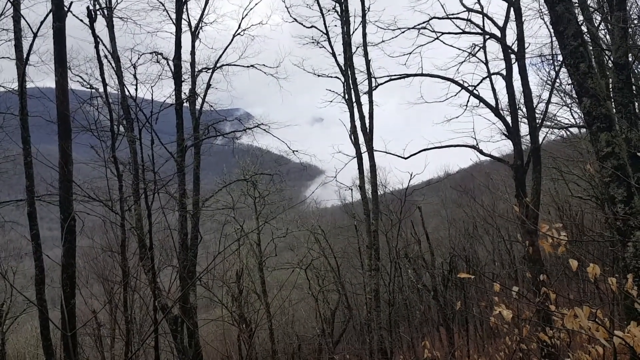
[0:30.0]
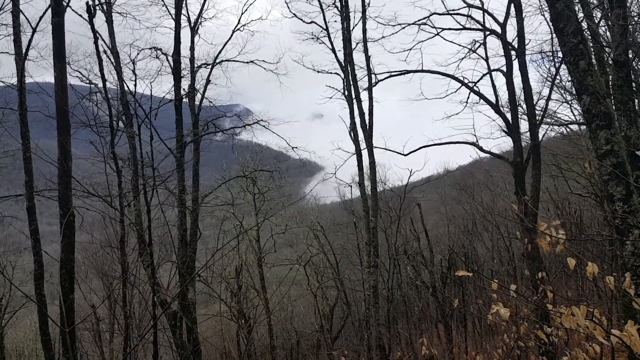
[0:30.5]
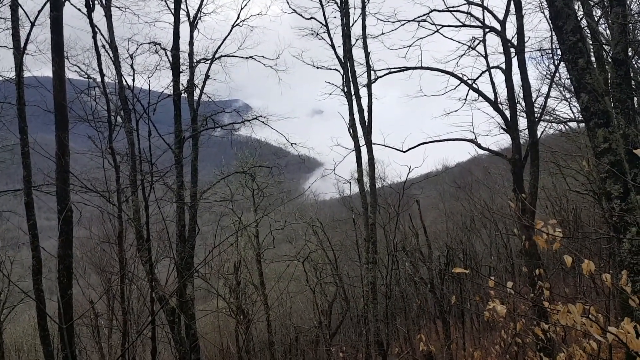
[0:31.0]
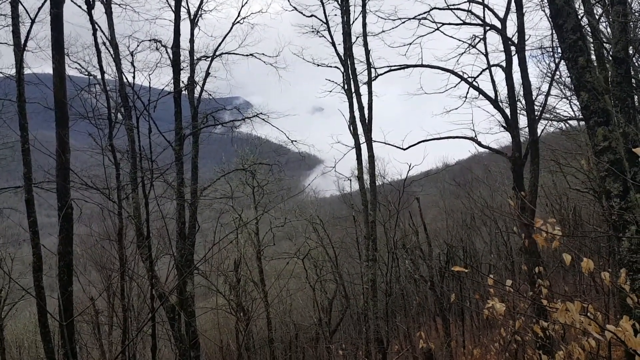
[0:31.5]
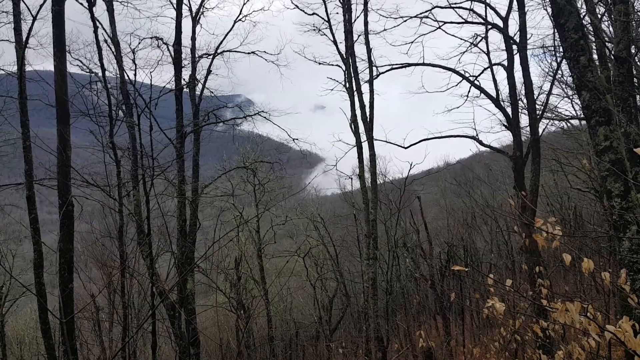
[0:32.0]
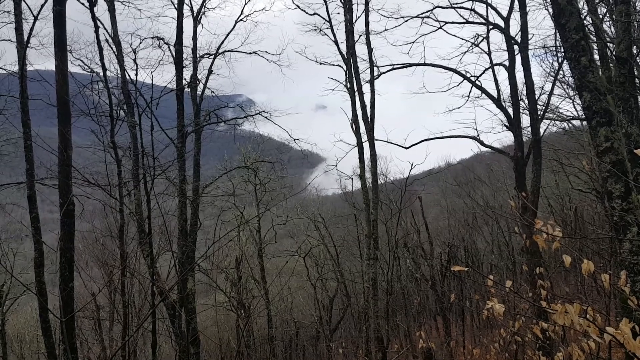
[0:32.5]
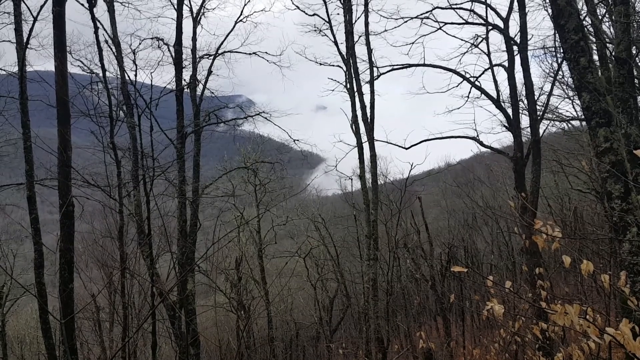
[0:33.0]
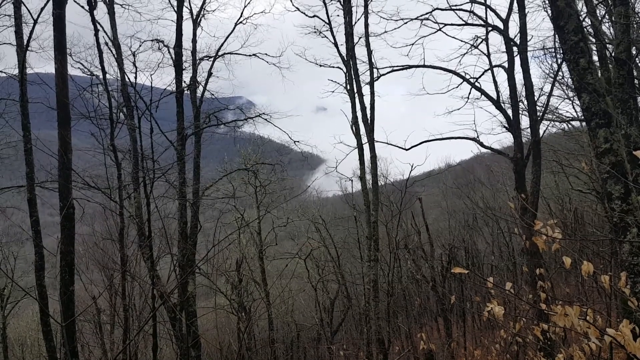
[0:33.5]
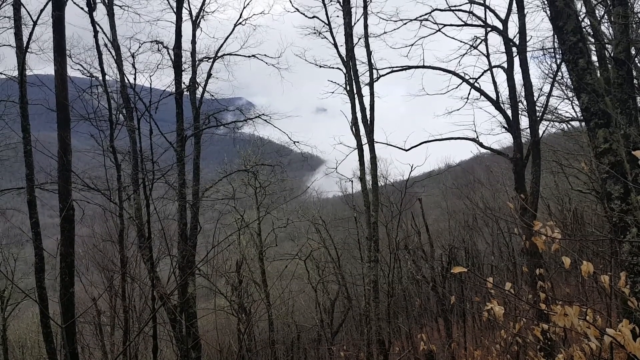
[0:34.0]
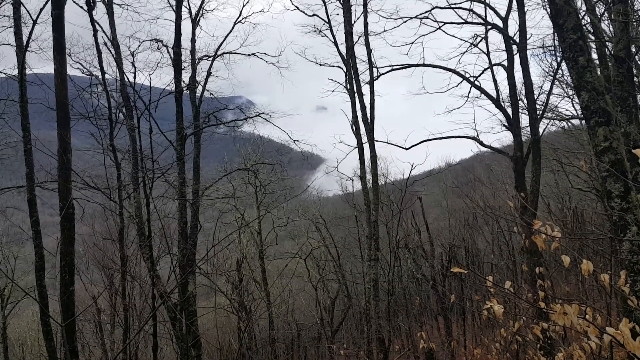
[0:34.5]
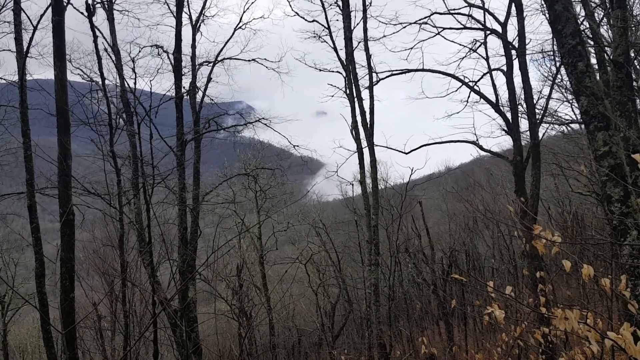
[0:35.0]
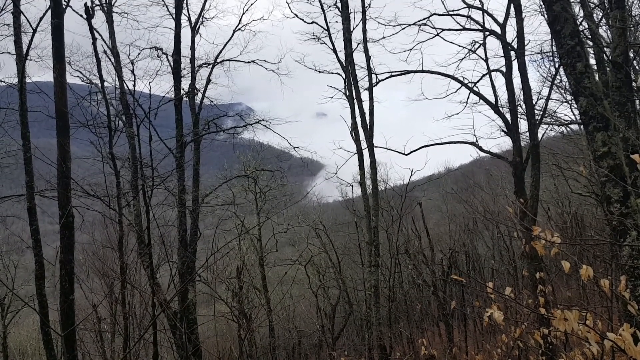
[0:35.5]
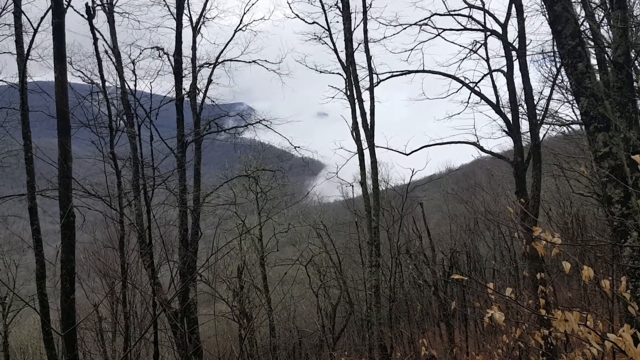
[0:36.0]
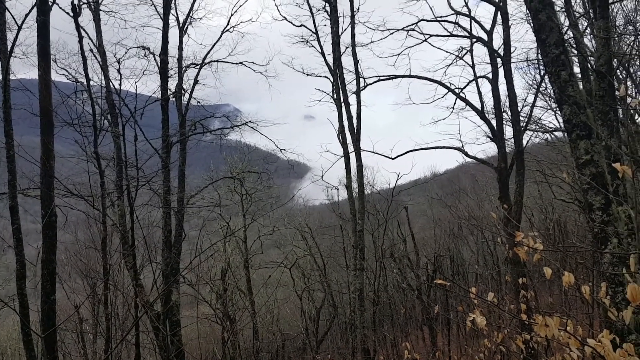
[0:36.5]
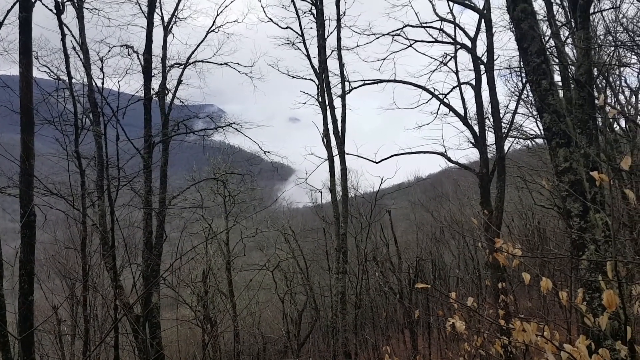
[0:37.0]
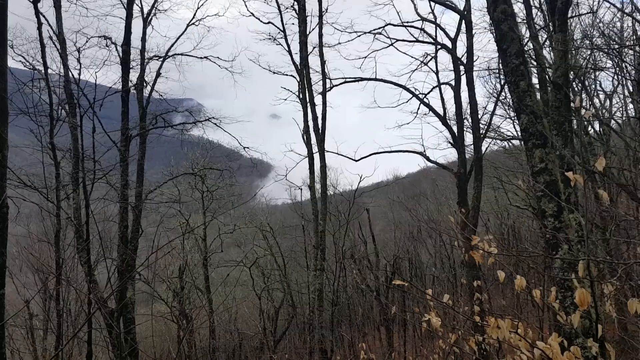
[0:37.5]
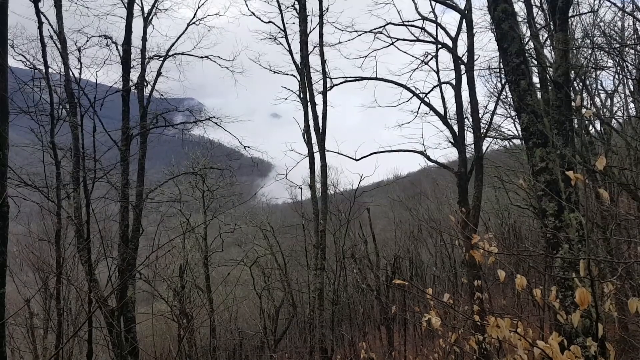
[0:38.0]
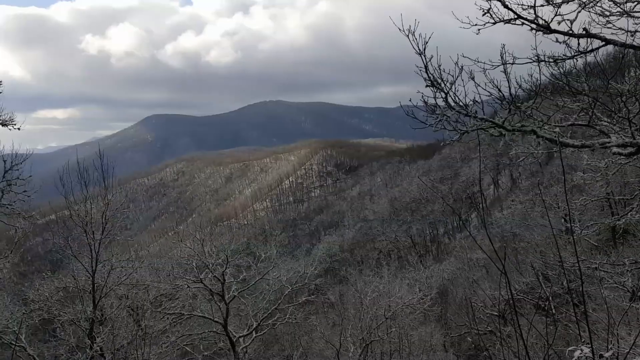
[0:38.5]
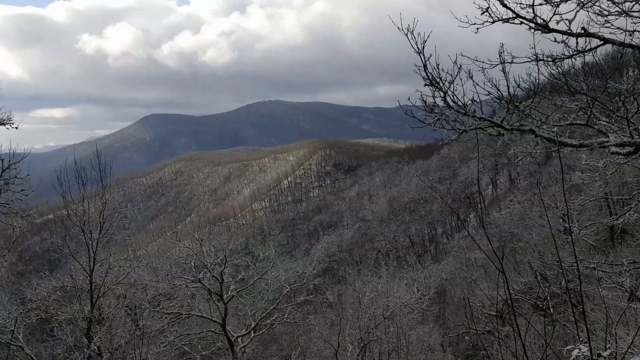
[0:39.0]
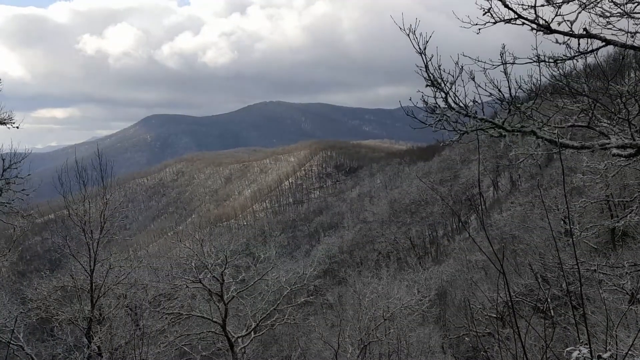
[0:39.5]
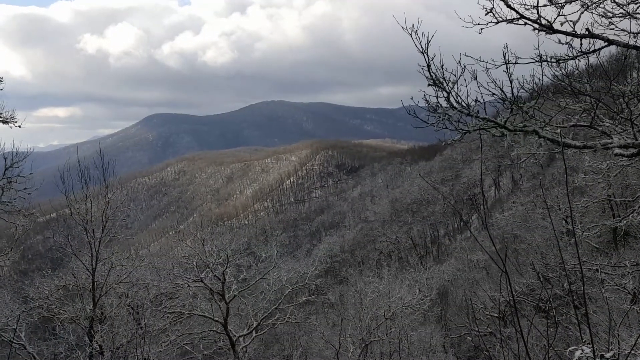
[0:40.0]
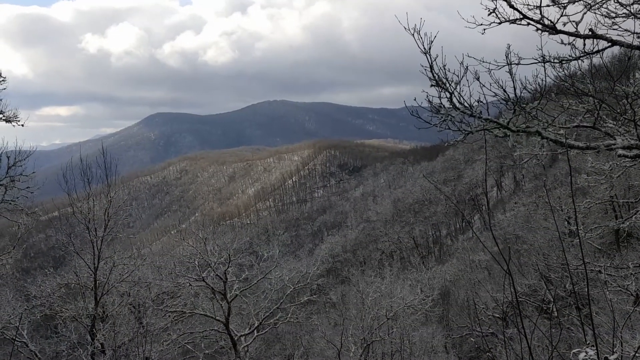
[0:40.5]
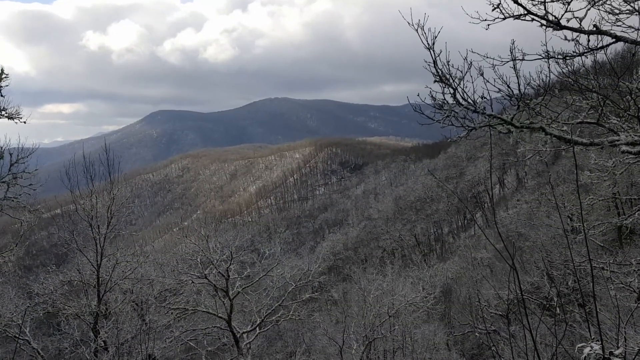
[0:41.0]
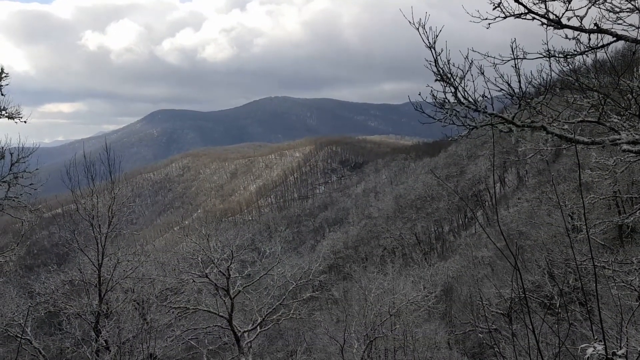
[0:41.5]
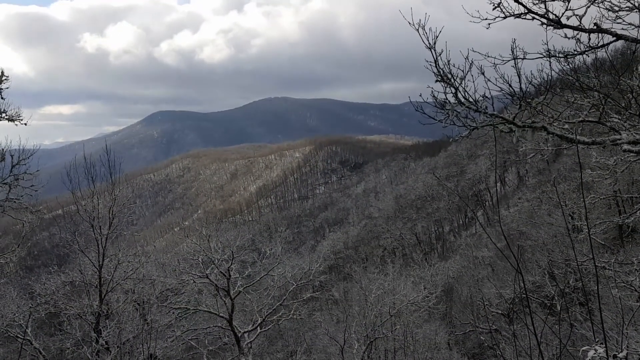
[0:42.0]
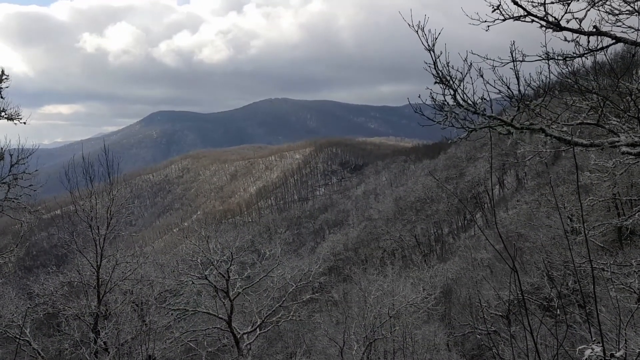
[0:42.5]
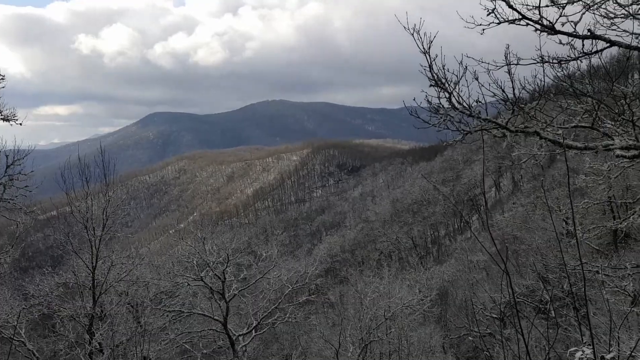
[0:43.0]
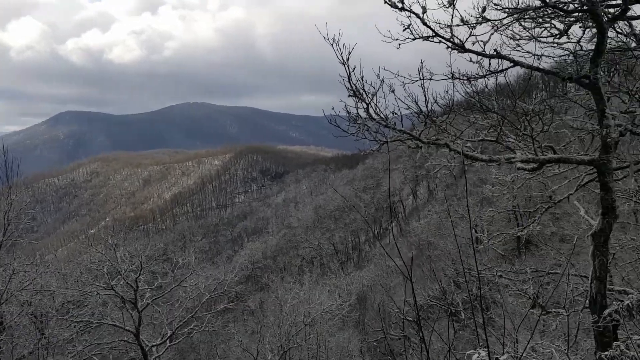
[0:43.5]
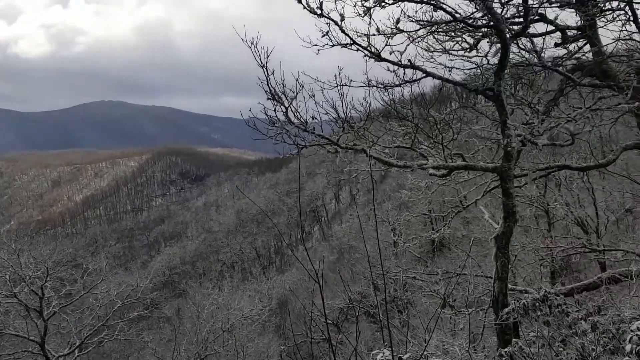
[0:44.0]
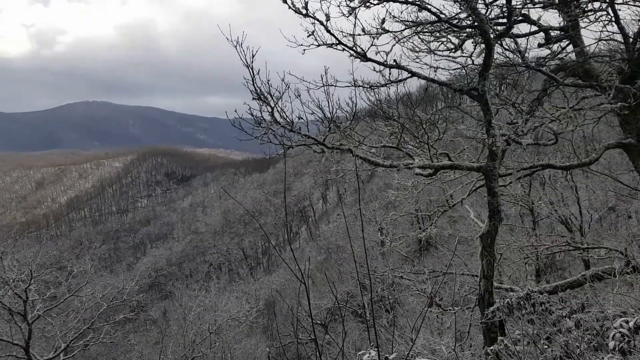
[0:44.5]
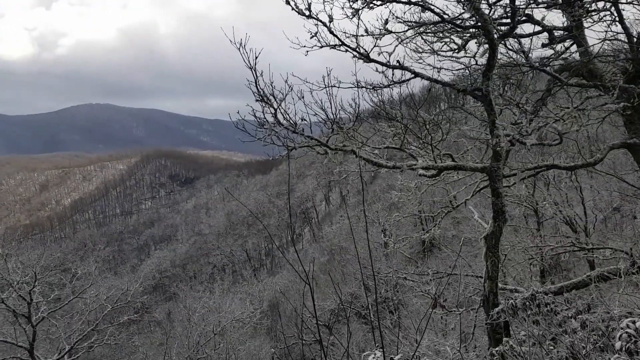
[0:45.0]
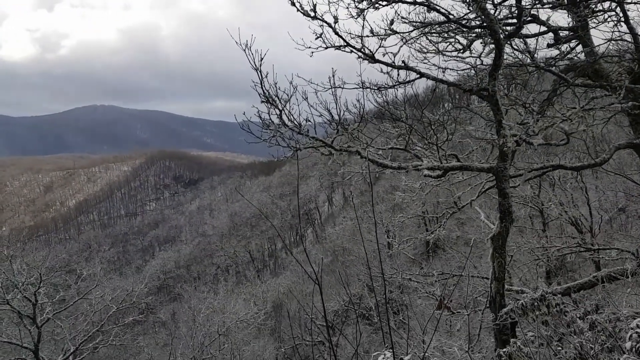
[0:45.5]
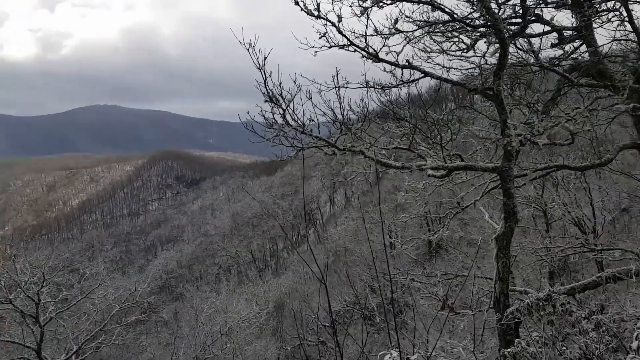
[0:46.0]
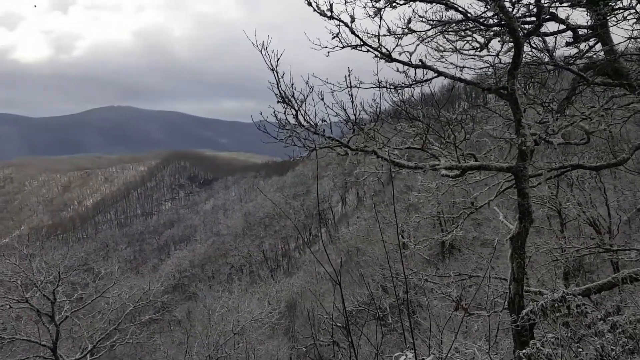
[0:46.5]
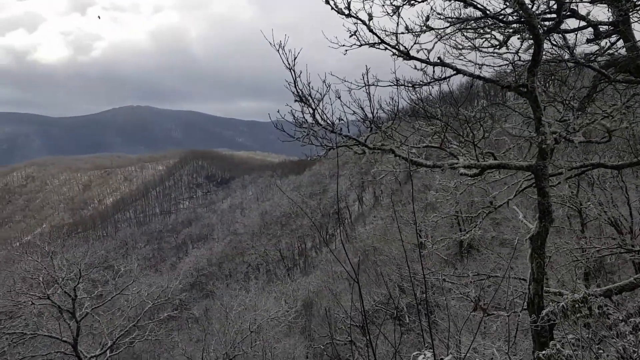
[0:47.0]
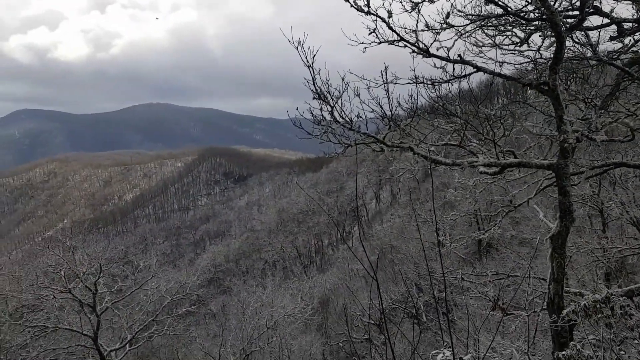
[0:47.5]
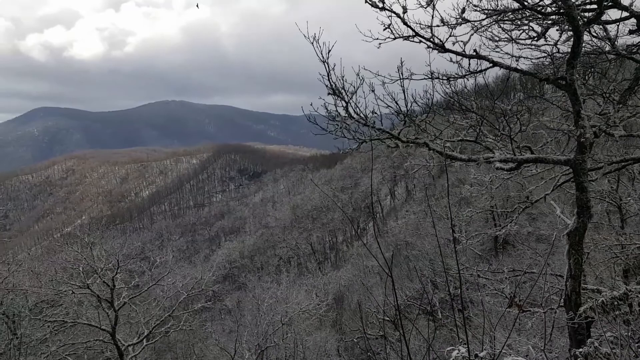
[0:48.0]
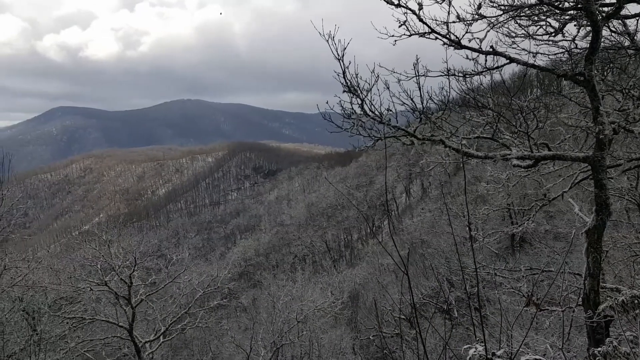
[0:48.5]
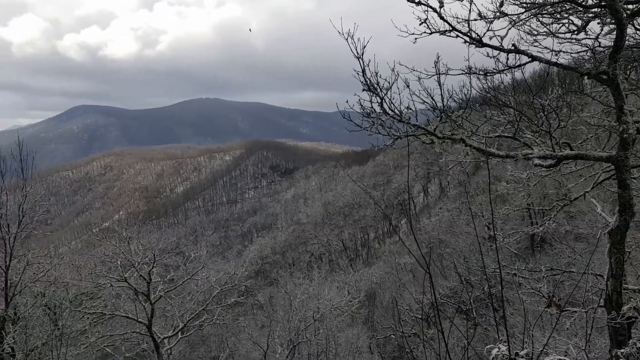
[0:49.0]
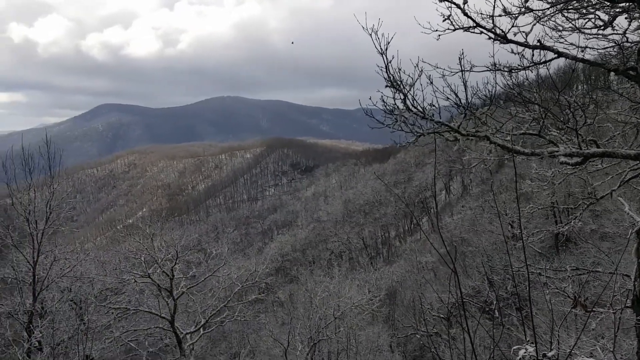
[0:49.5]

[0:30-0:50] More views of the mountains follow, with clouds and nature. It looks kind of wintry or like early spring, and there is not a lot of green. The view is from the woods, looking through trees that have no leaves, possibly in the aftermath of winter or a forest fire. Cloud patterns are rolling in on the horizon and look perhaps a little daunting.